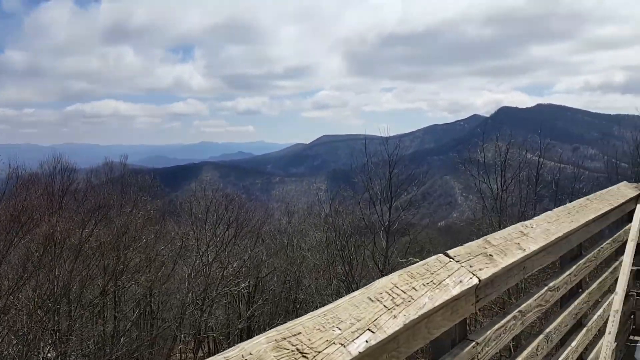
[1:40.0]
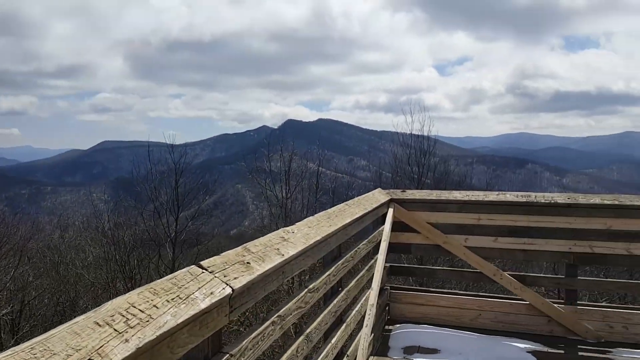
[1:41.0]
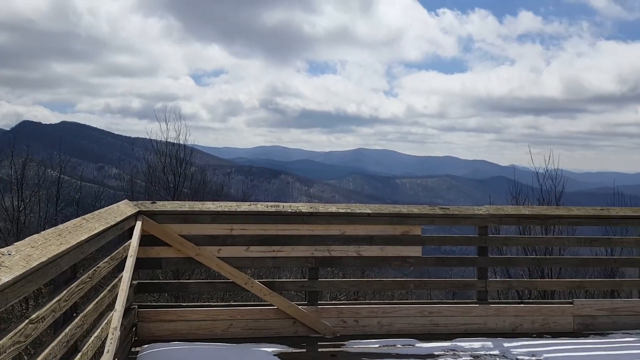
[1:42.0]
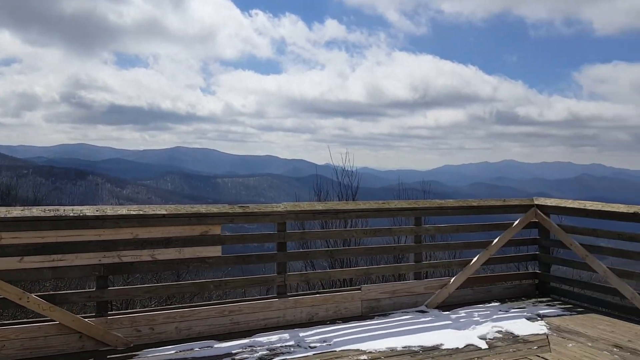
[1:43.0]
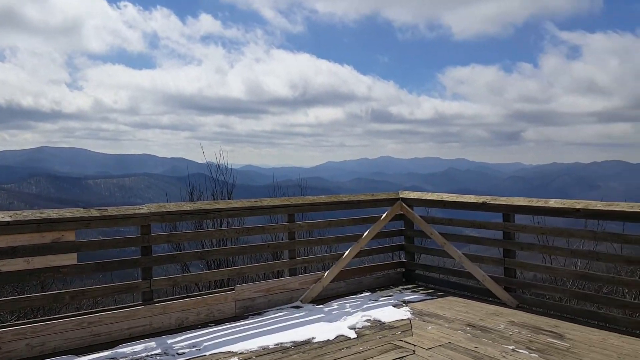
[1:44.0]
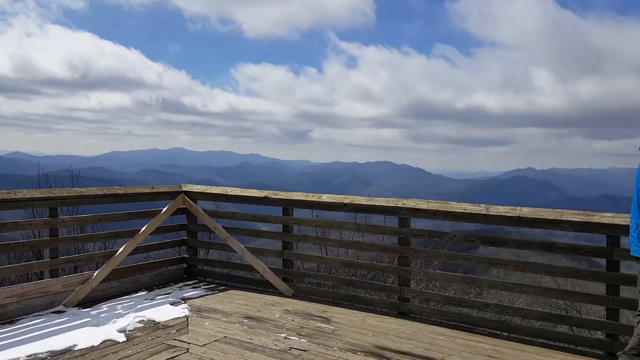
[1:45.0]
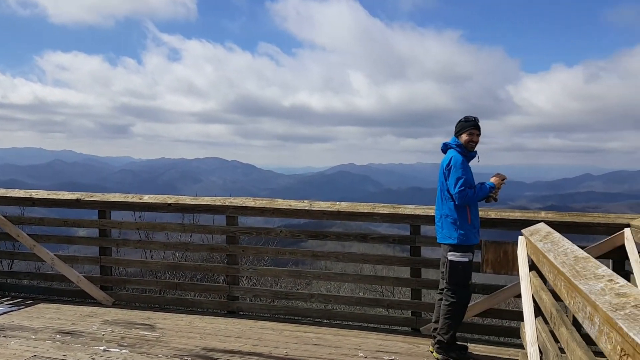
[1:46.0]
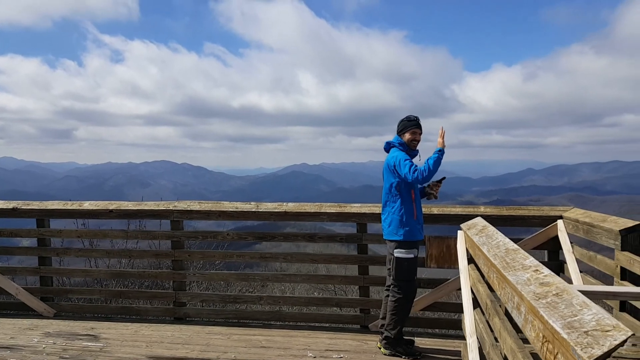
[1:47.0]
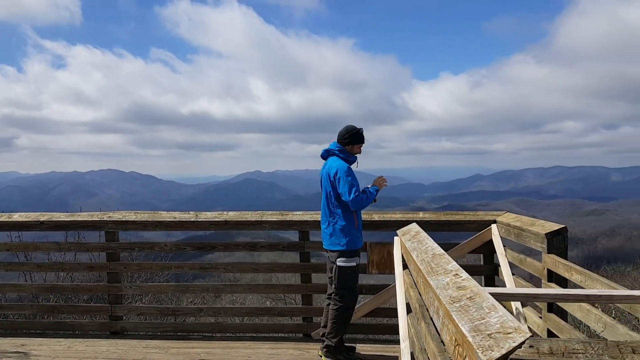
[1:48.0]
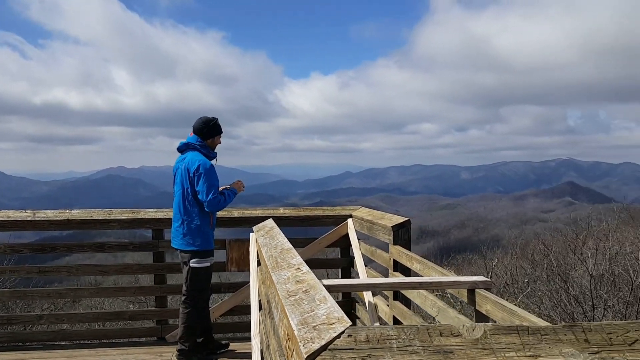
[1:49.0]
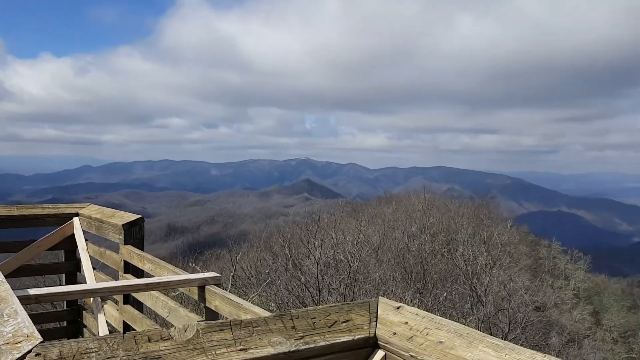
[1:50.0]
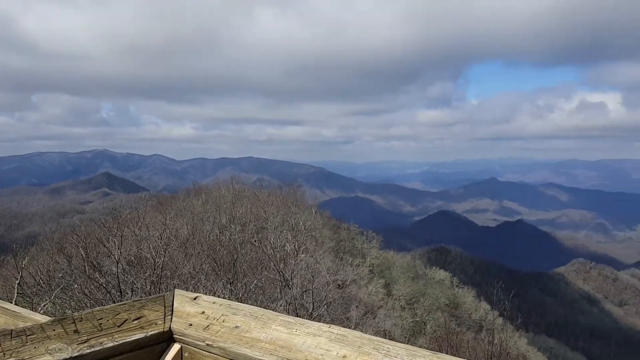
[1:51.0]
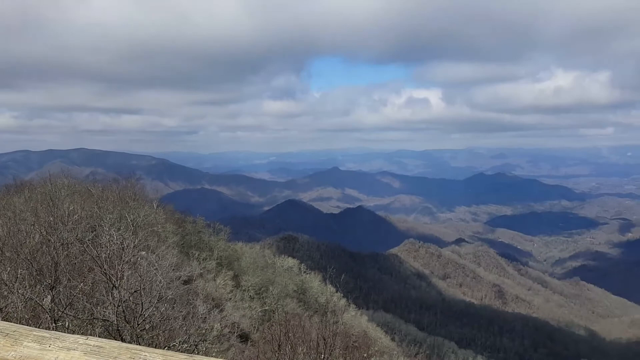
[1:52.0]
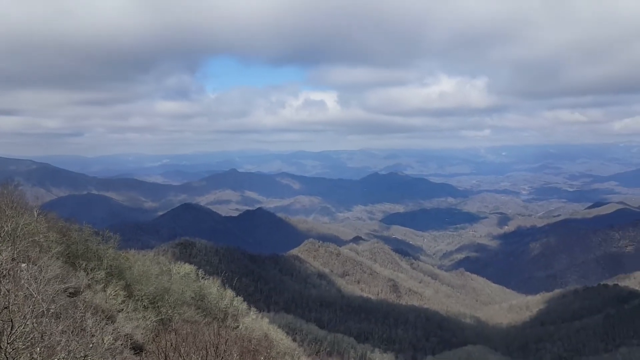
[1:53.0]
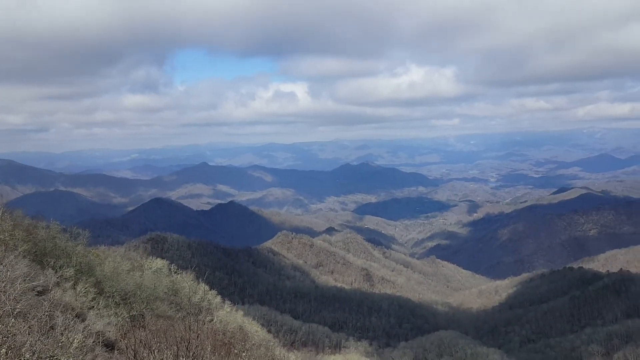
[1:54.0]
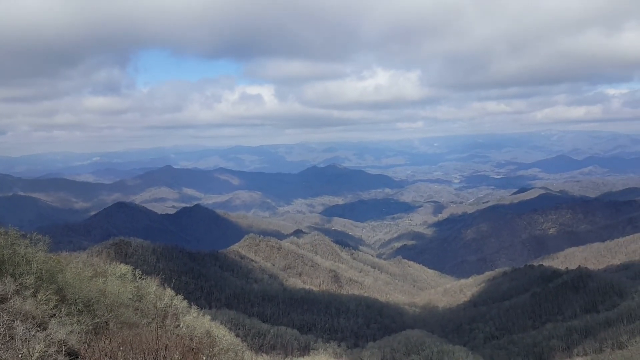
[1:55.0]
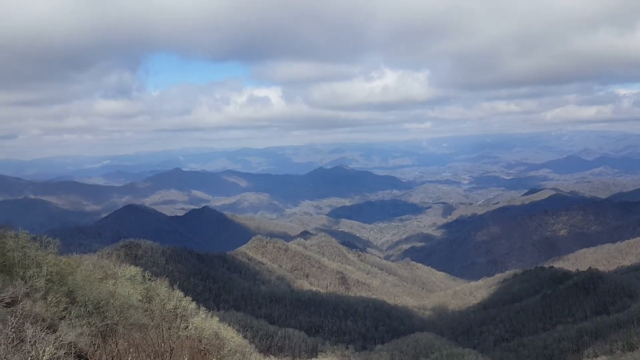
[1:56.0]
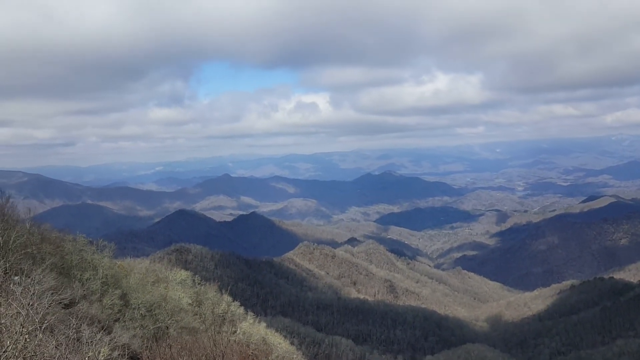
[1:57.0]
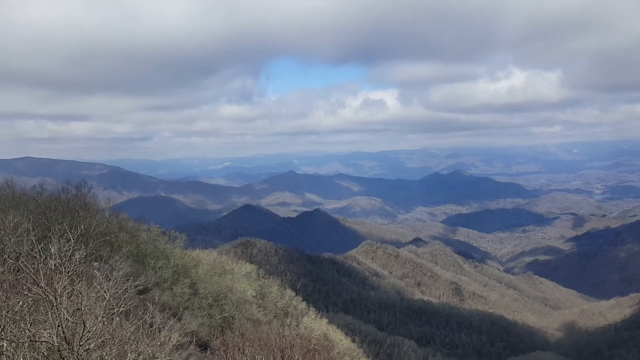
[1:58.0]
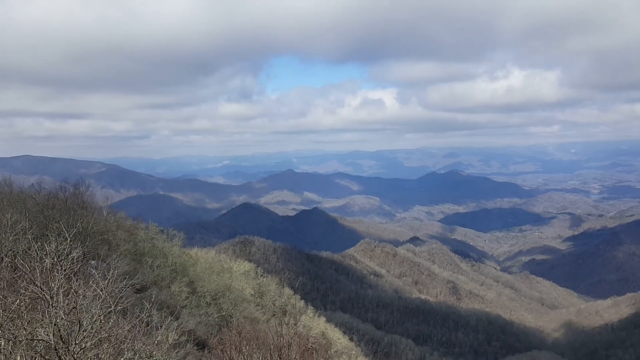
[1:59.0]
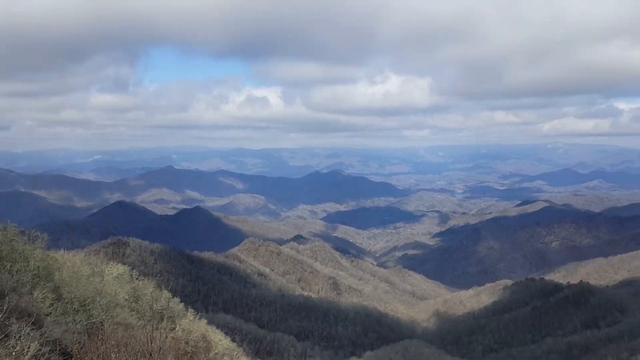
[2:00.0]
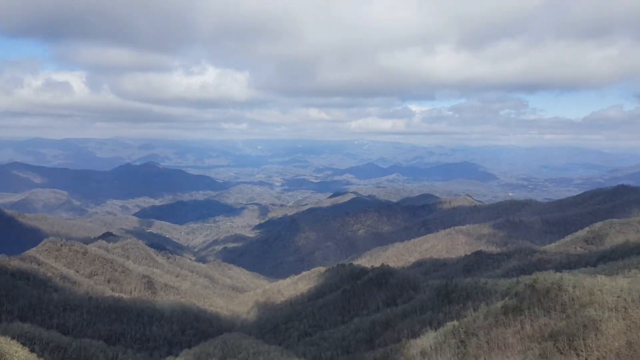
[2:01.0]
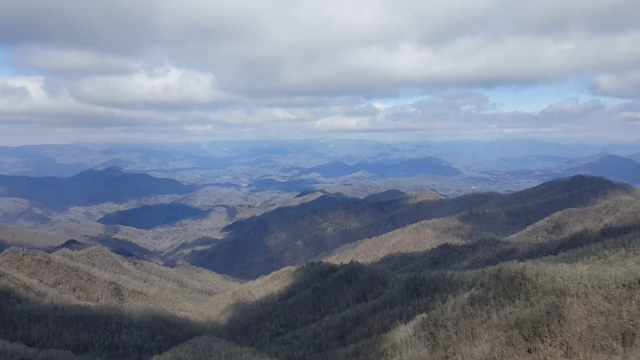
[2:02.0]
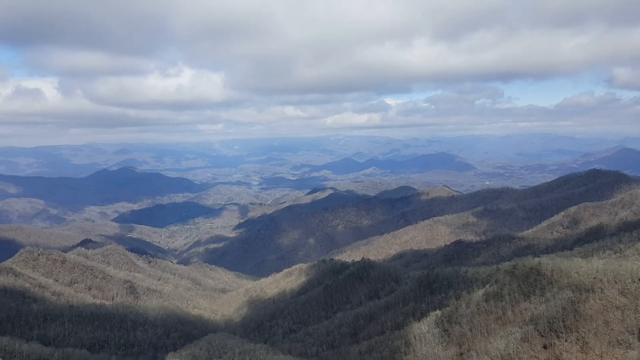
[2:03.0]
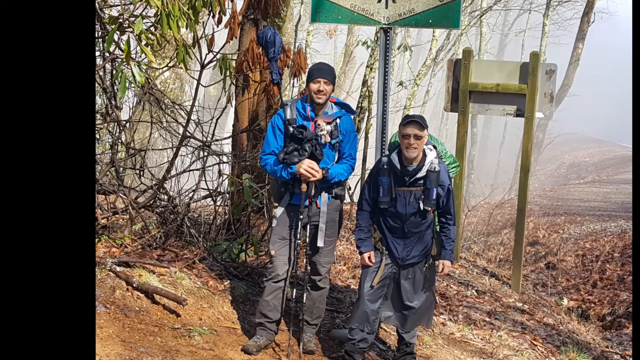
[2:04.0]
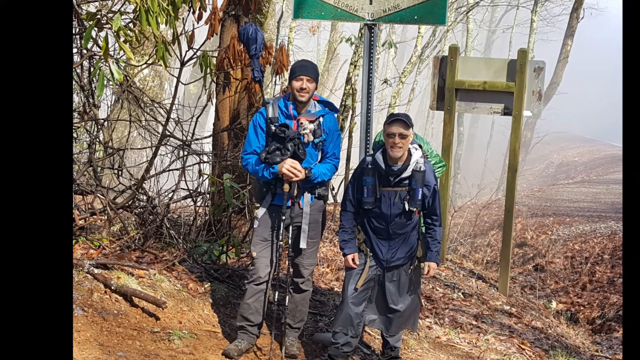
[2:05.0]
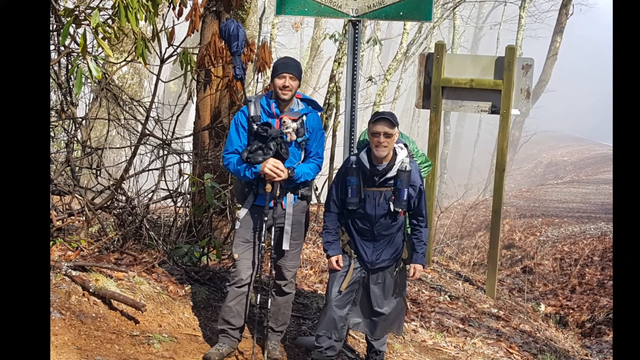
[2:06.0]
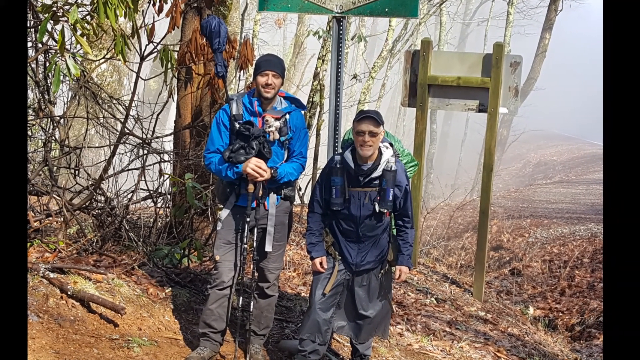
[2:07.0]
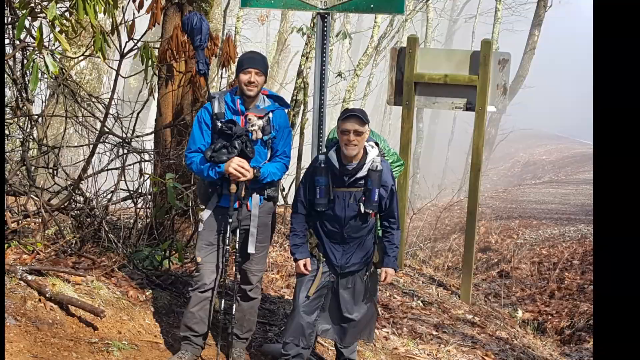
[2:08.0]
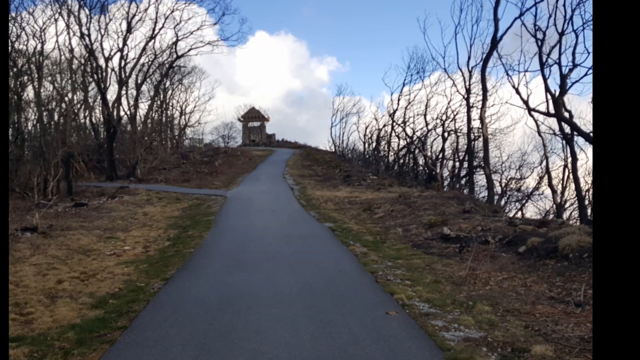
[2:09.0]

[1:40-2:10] At the top of the mountain, the view is from a wooden structure, with snow visible on the bottom of it. This appears to be the top of their destination, and they look around at the vastness below them. More pictures of them on their journey follow, showing what they carried with them: their backpacks and gear.